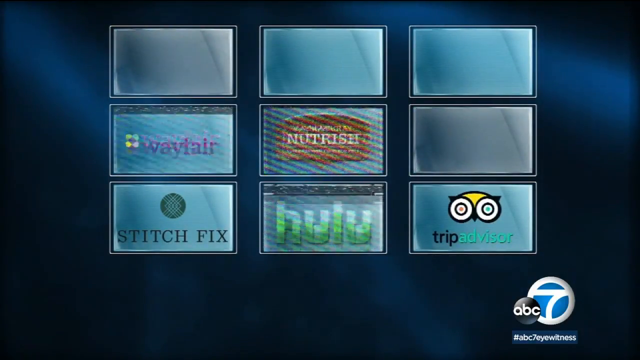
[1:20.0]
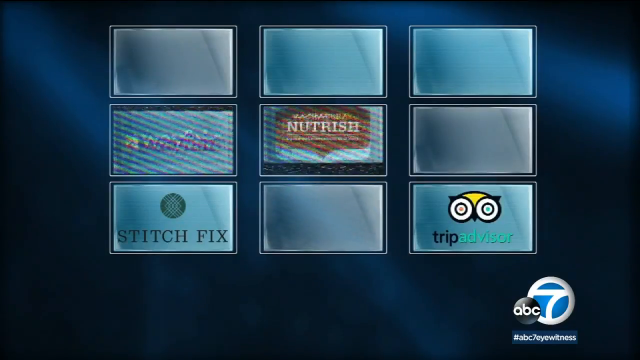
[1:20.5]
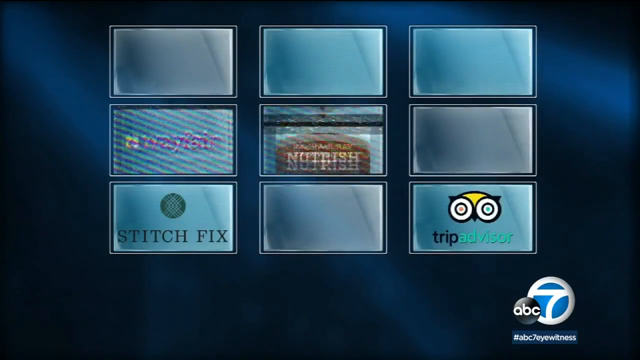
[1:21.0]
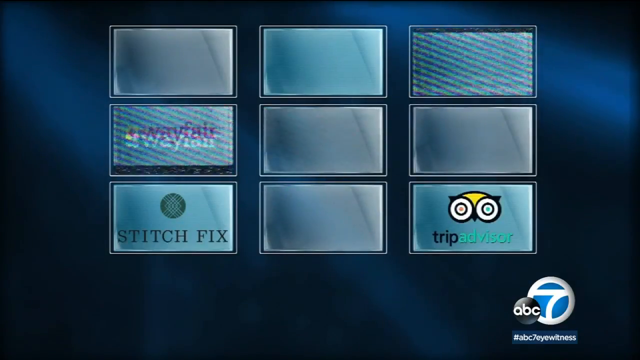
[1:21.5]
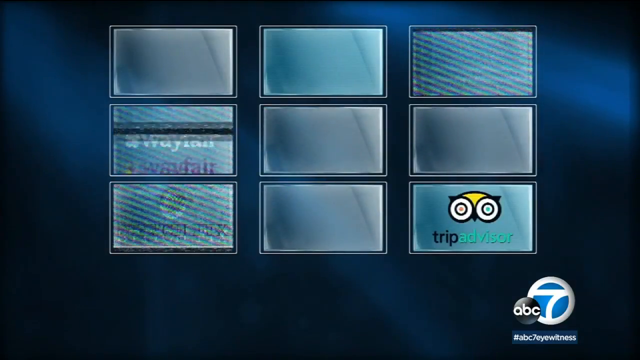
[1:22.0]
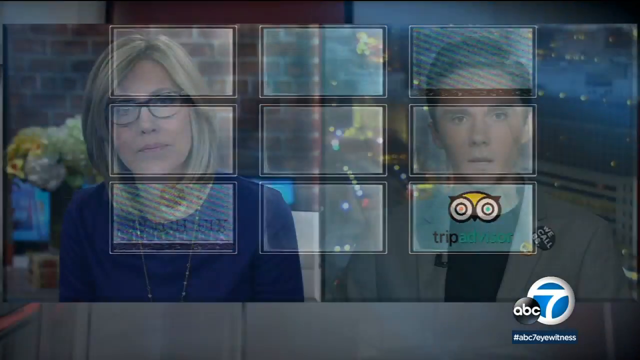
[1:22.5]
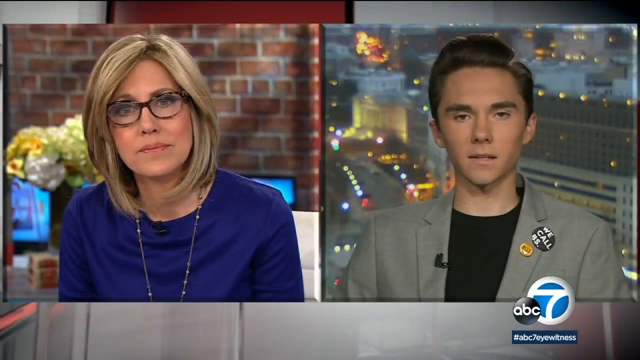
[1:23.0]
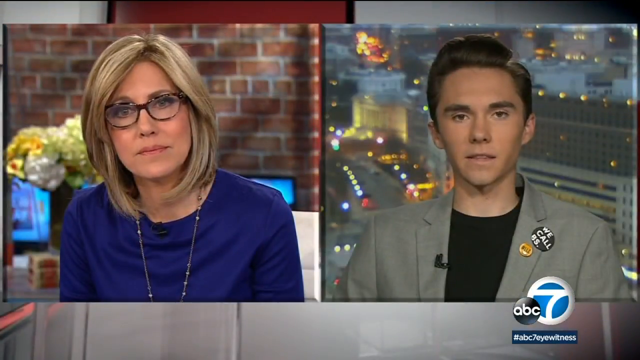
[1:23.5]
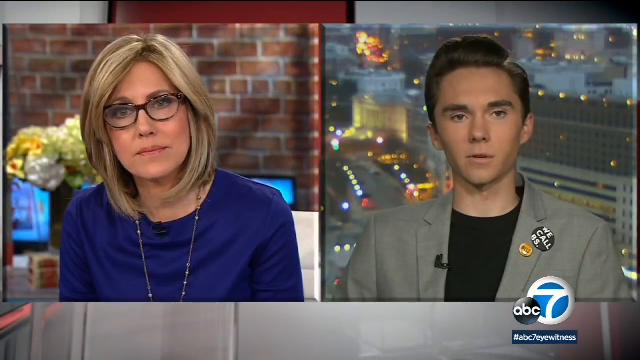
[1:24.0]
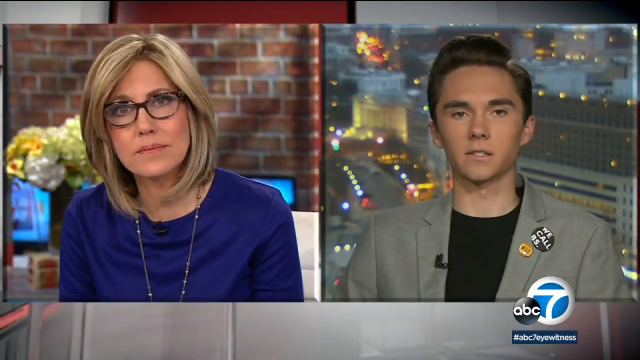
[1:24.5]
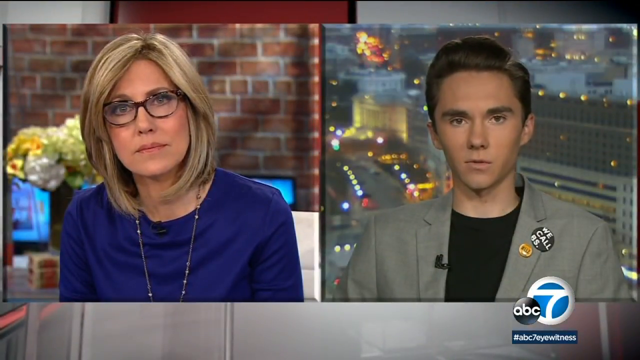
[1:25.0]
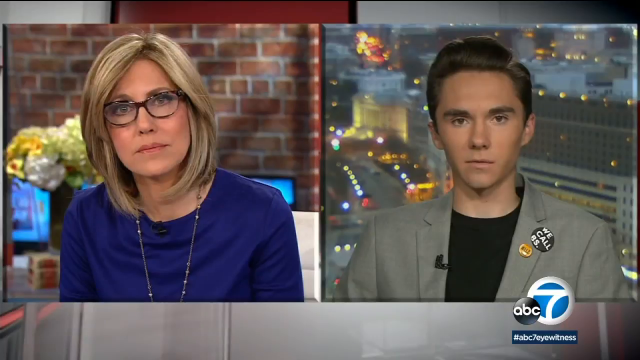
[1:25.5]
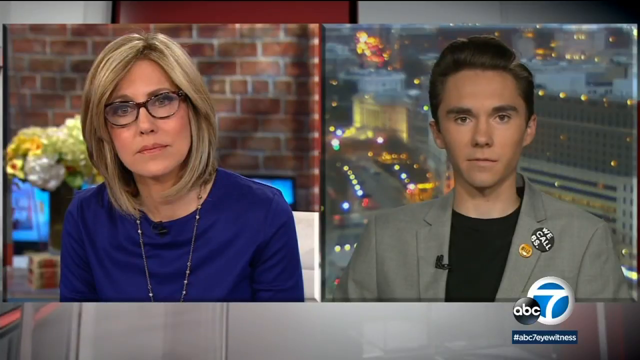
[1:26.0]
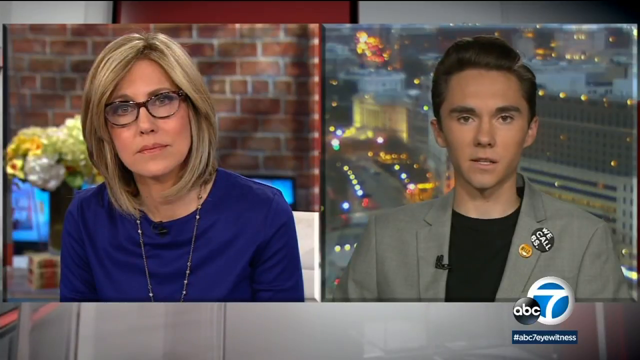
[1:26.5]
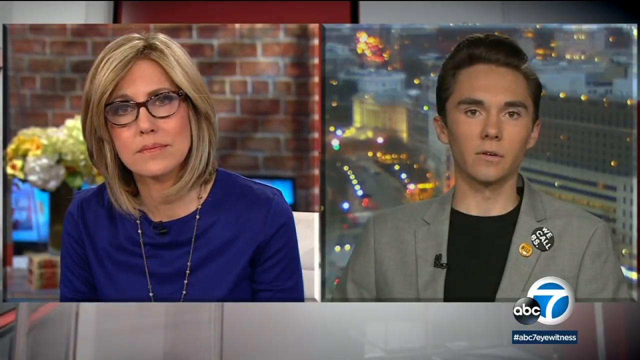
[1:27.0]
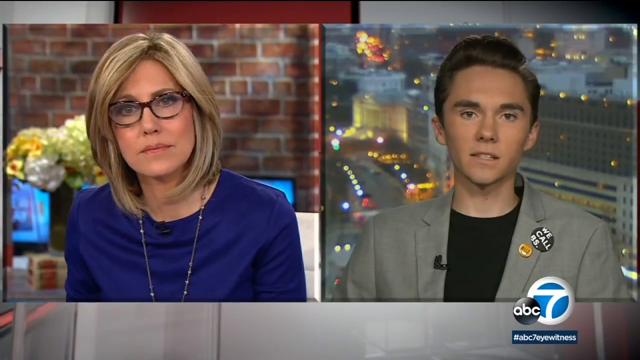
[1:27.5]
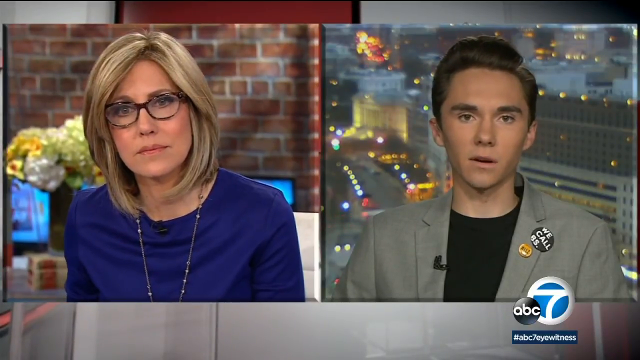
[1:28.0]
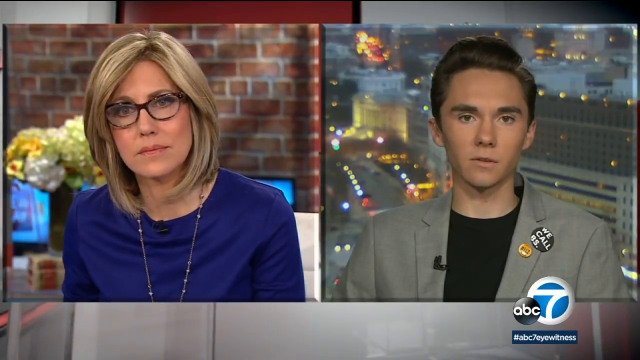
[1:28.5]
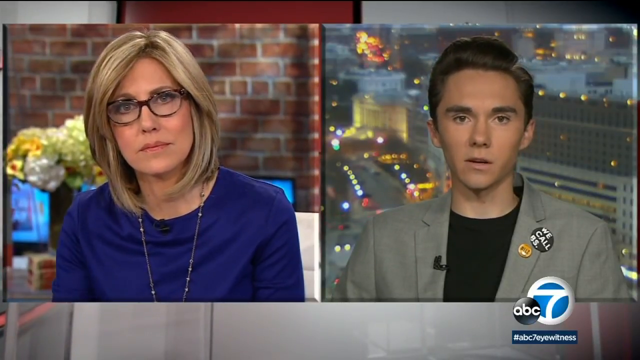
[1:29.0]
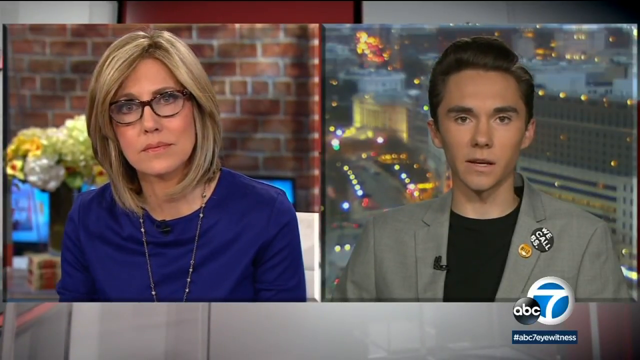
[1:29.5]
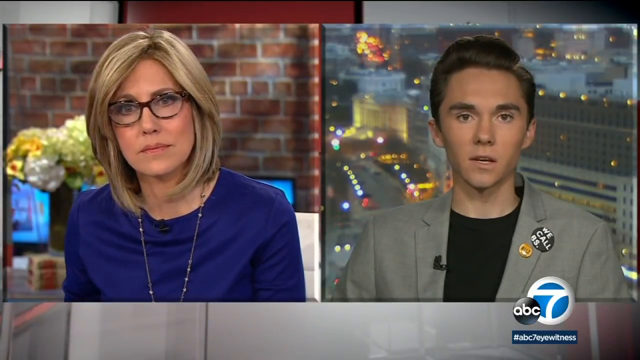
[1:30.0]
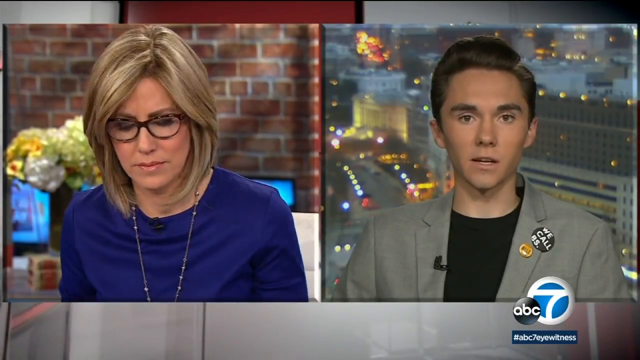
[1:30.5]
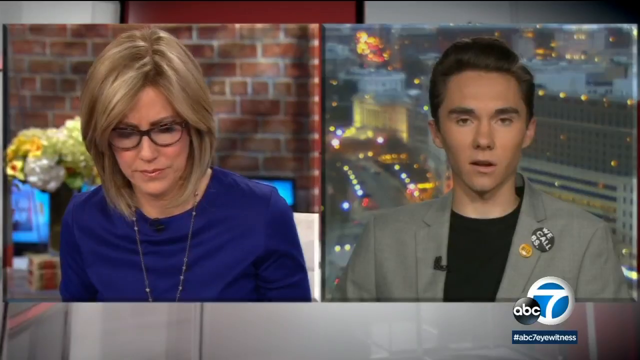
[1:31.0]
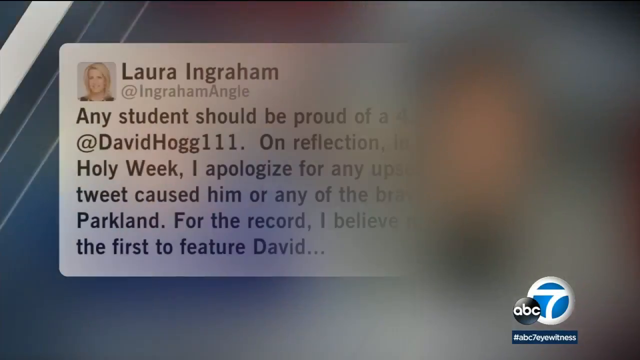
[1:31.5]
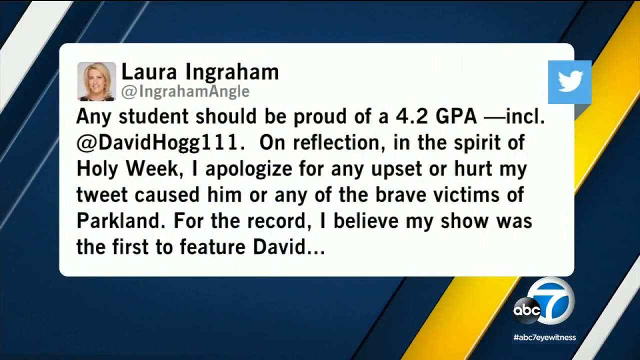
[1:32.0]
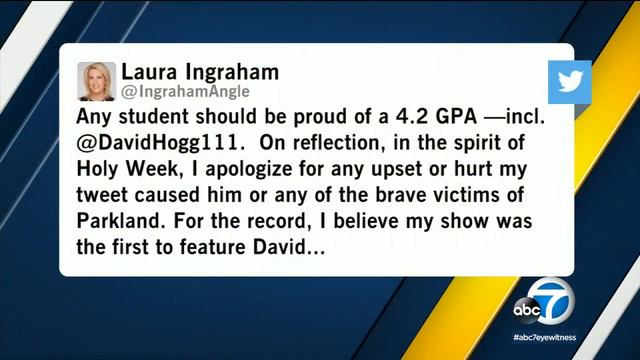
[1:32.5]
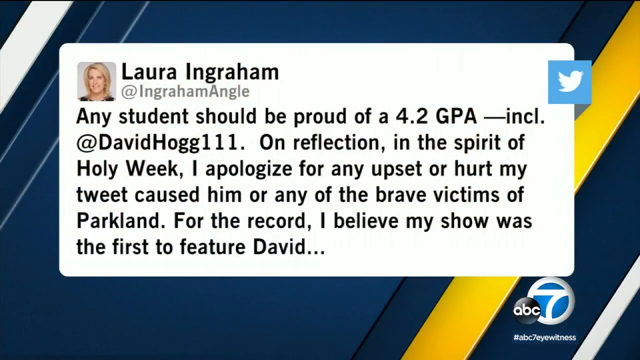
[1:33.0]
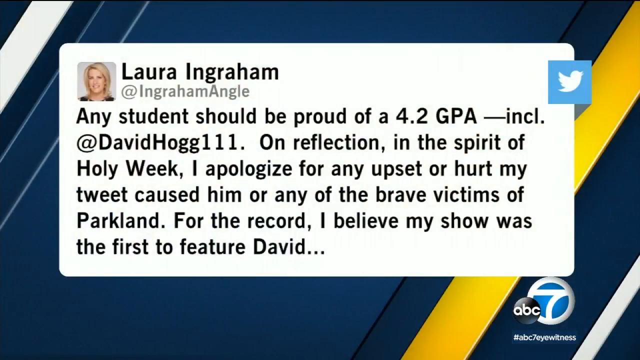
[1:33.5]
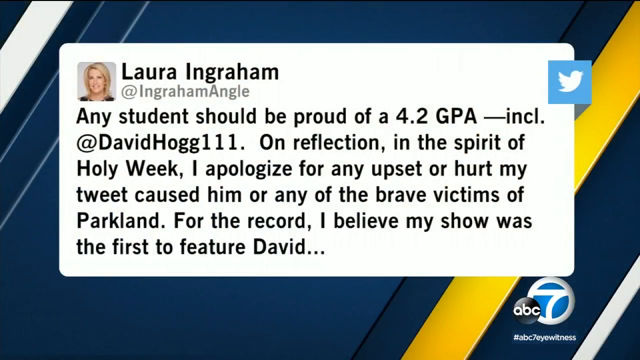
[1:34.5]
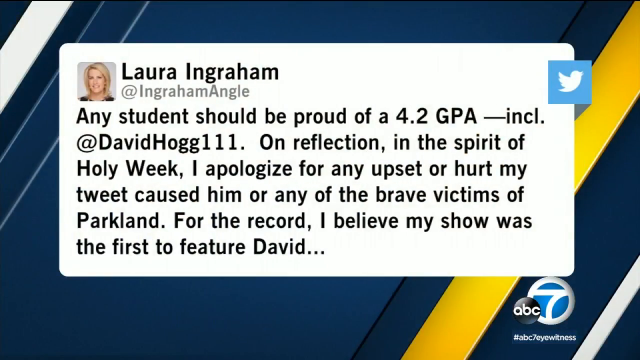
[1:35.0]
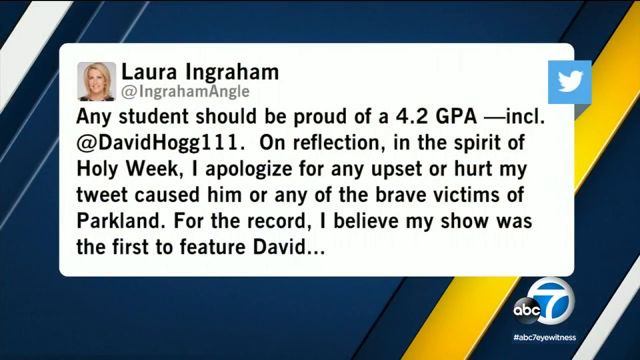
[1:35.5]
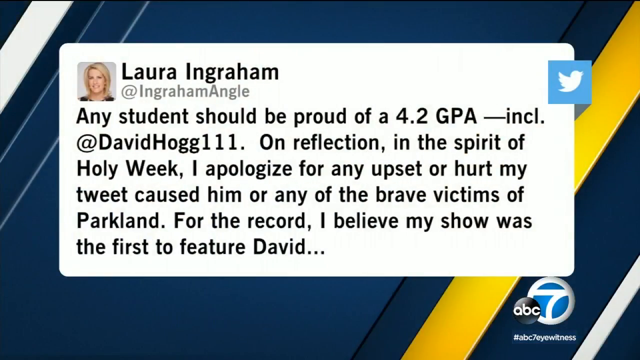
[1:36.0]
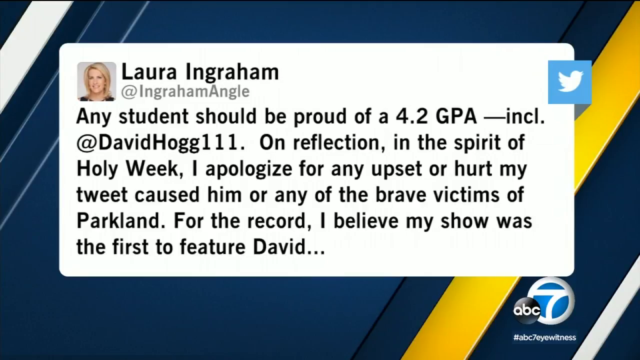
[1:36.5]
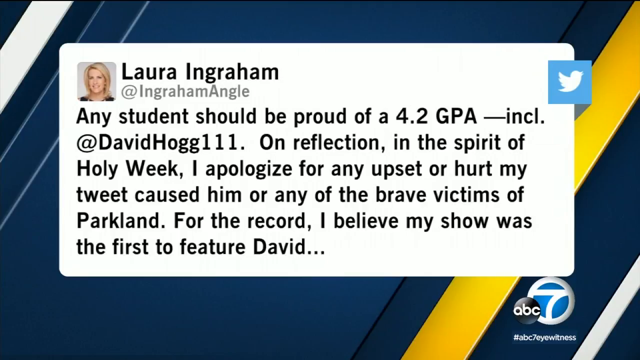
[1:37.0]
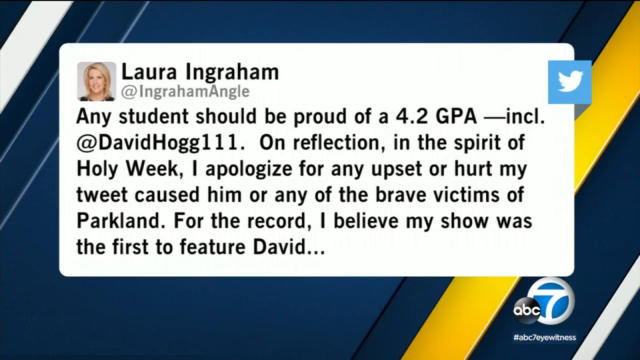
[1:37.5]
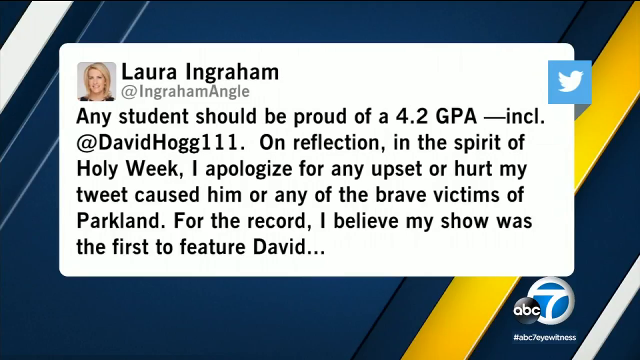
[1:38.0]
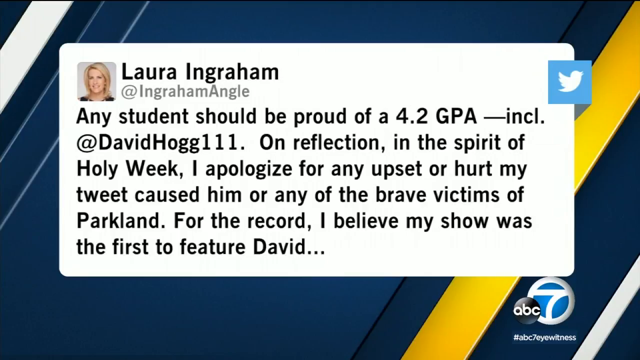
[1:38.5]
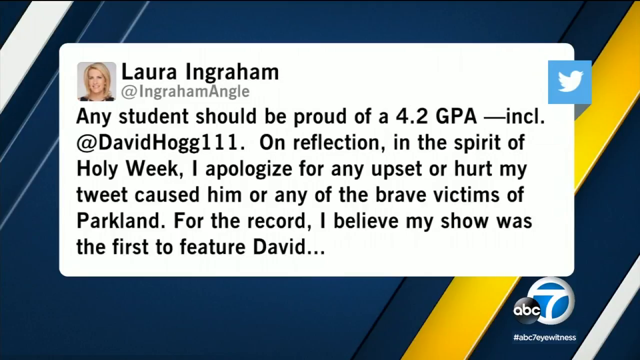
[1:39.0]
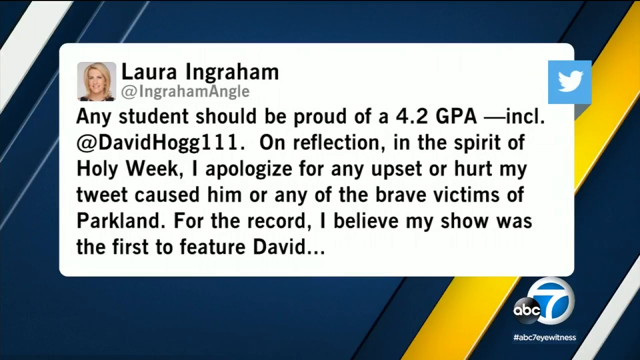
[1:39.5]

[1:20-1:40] Logos are shown in lines: Wayfair first, a second logo on the second line, and on the last line Stitch Fix, Hulu, and TripAdvisor with its logo. Laura and David are then shown together. Laura now wears a blue T-shirt with a necklace and sunglasses and has blonde hair. Both are talking about something in the news. Laura's Twitter shows writing that says "any student should be proud of 4.2 GPA, including" David Hogg, and "I apologize for any upset or hurt my tweet caused him or any of the brave victims of Parkland. For the record, I believe my show was the first".